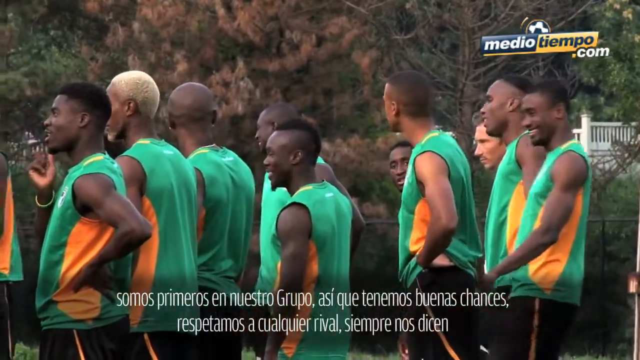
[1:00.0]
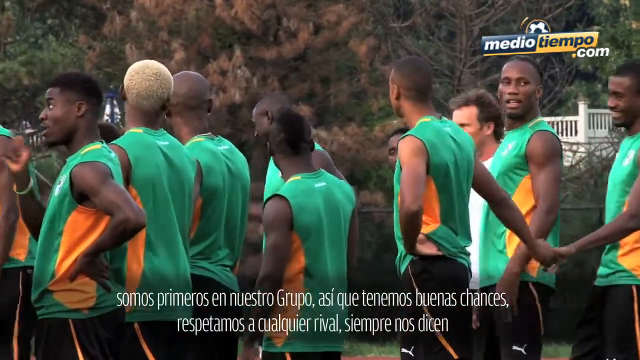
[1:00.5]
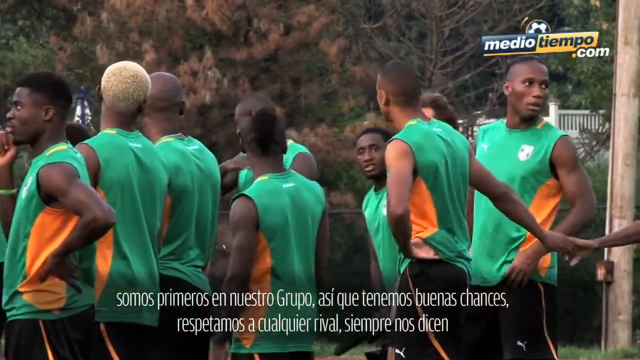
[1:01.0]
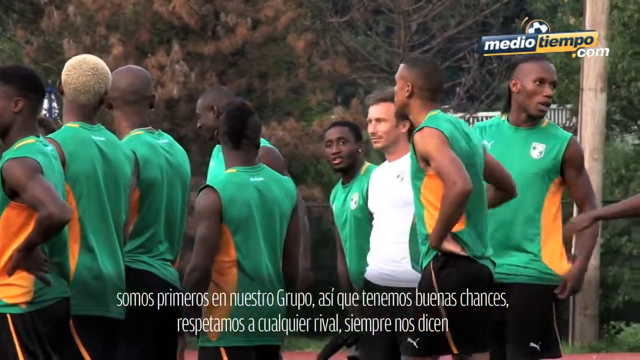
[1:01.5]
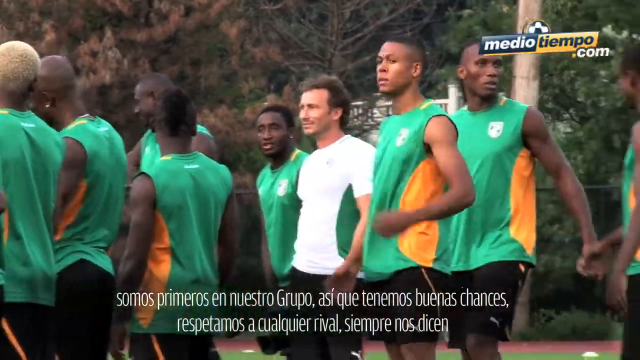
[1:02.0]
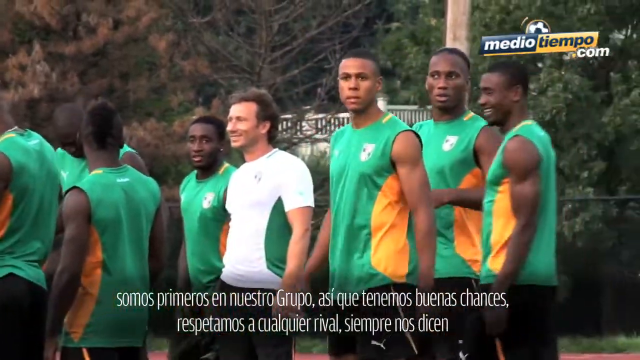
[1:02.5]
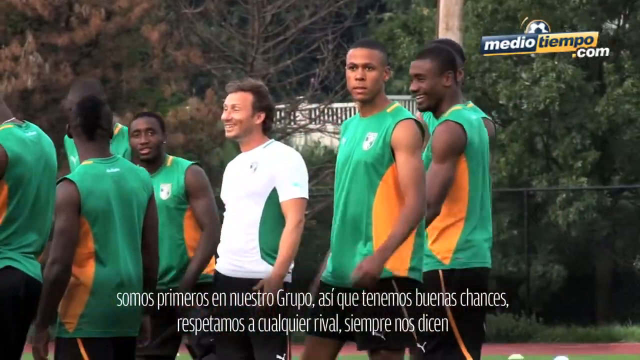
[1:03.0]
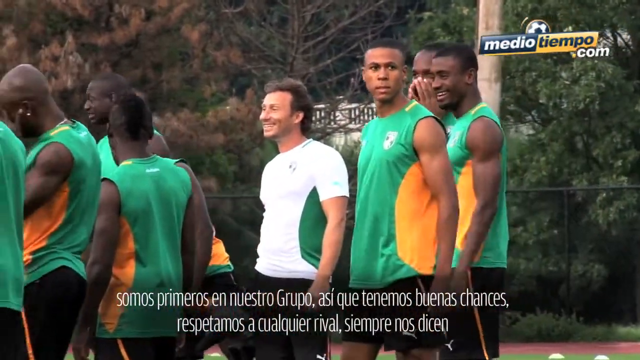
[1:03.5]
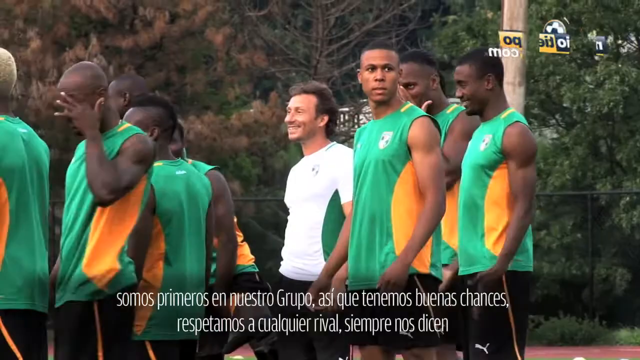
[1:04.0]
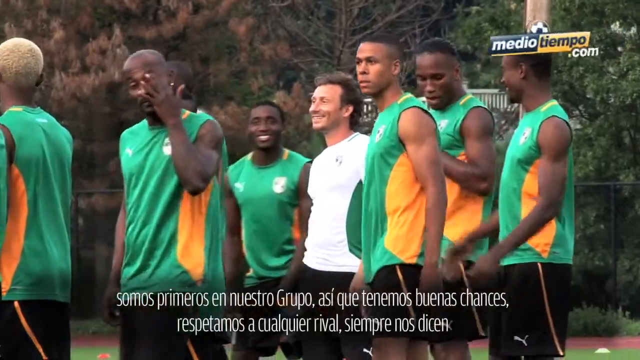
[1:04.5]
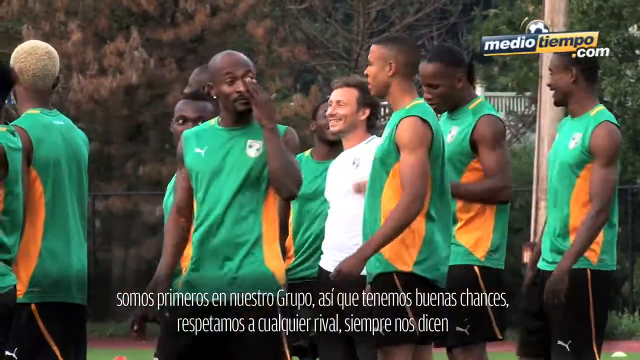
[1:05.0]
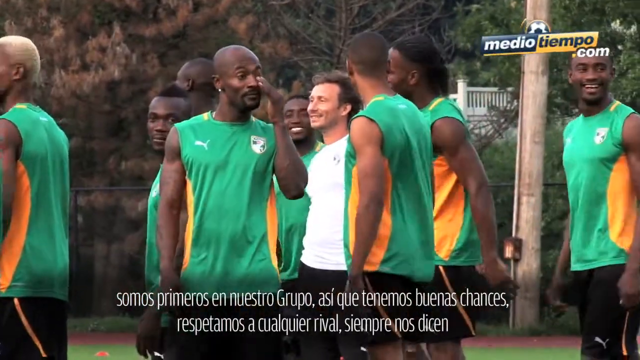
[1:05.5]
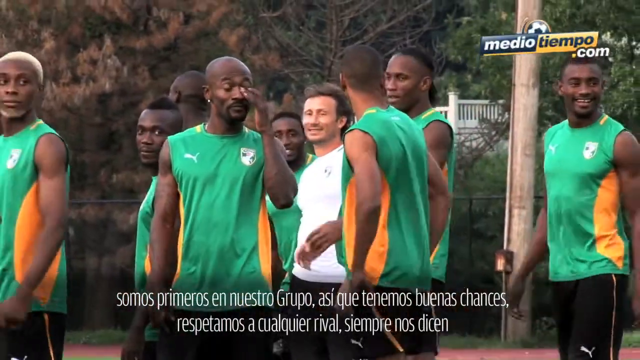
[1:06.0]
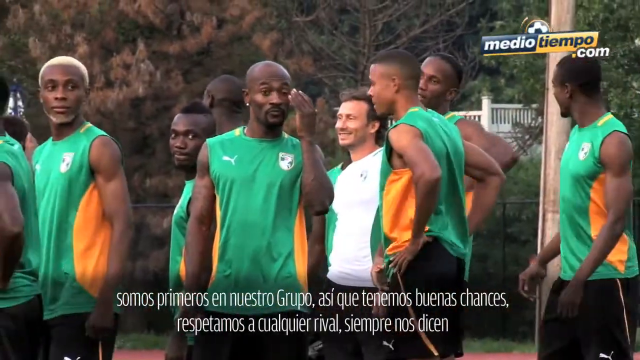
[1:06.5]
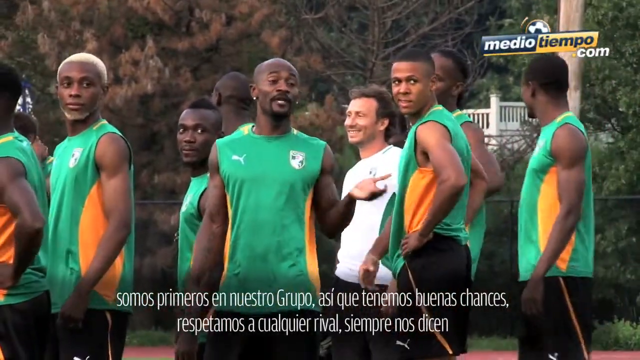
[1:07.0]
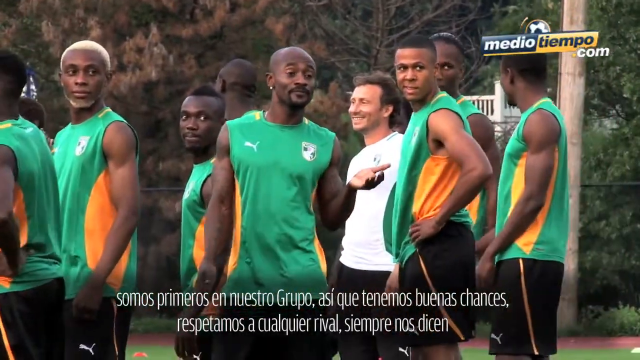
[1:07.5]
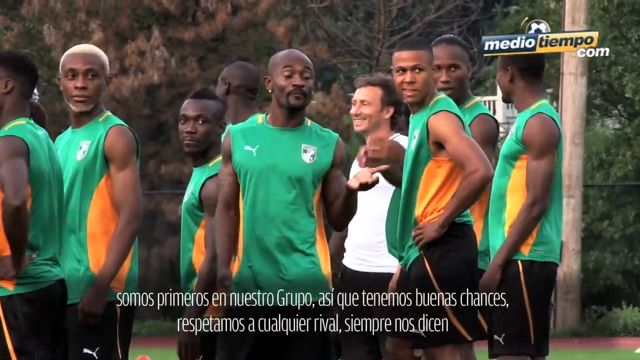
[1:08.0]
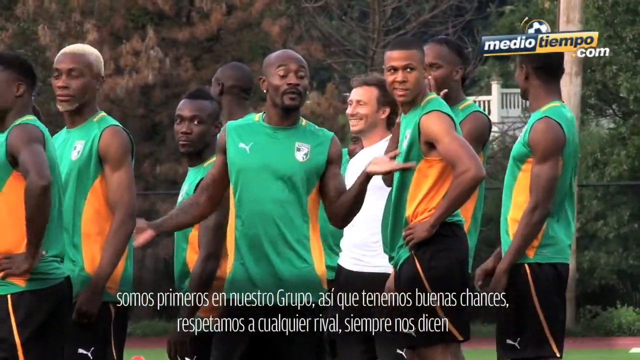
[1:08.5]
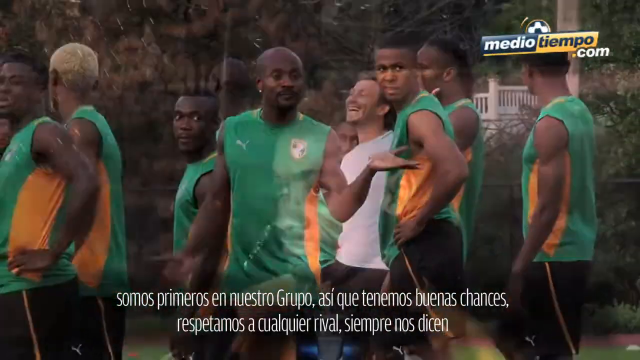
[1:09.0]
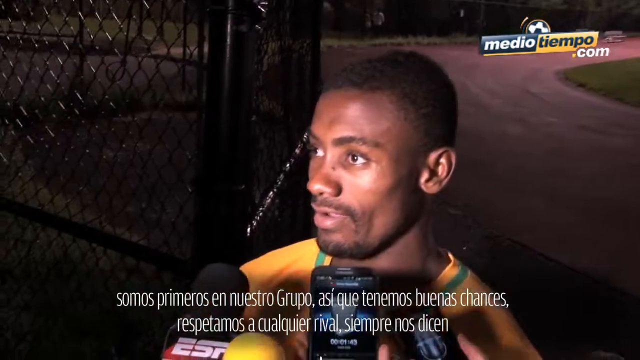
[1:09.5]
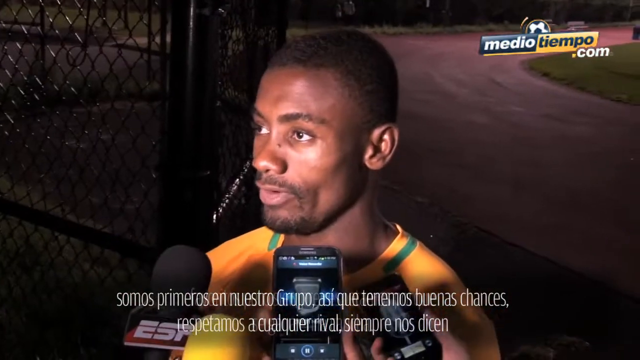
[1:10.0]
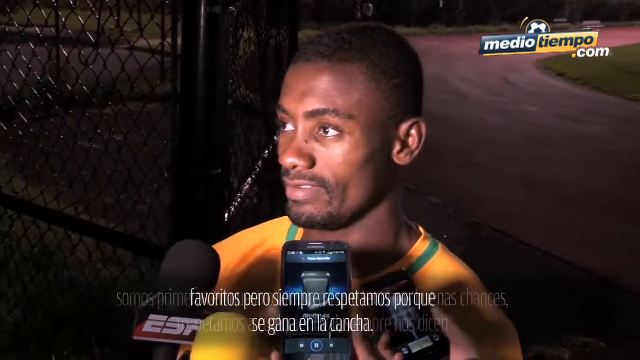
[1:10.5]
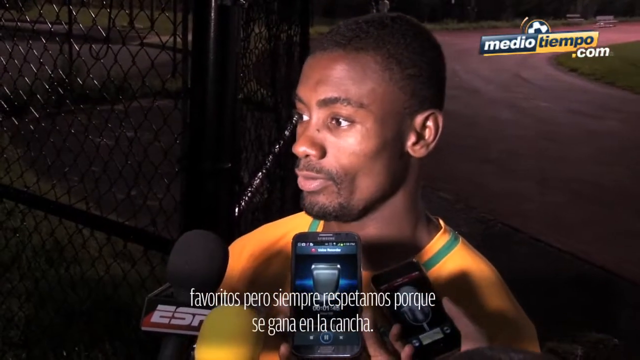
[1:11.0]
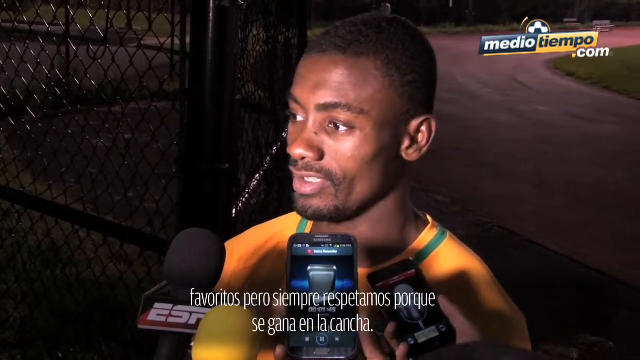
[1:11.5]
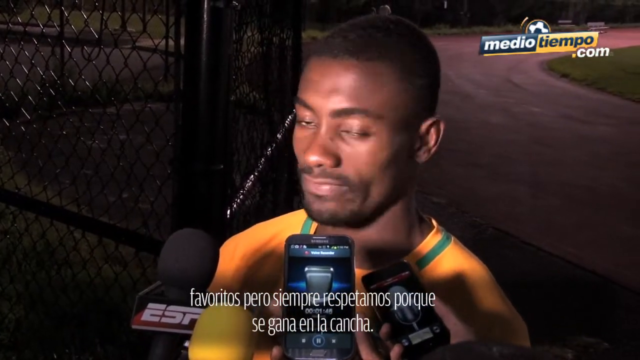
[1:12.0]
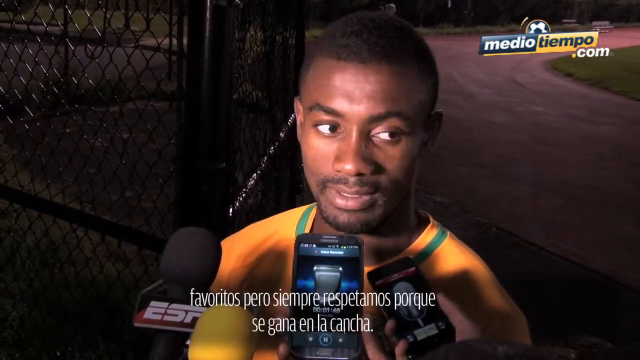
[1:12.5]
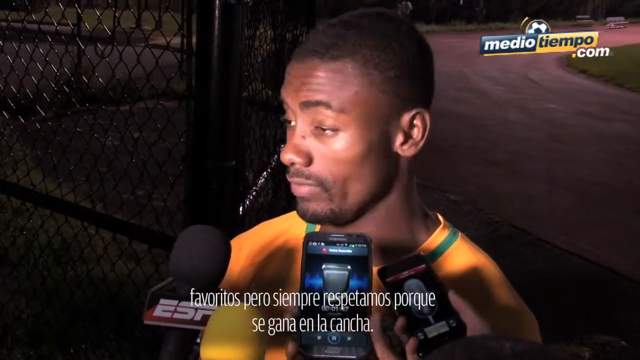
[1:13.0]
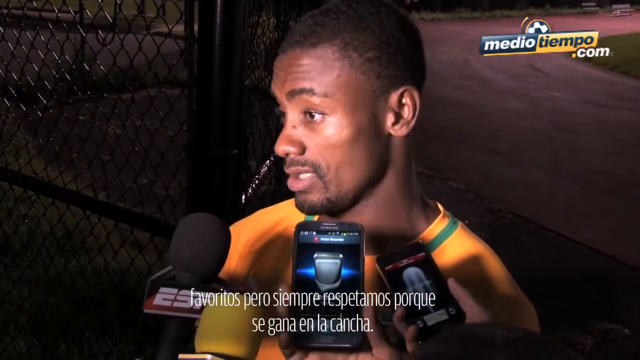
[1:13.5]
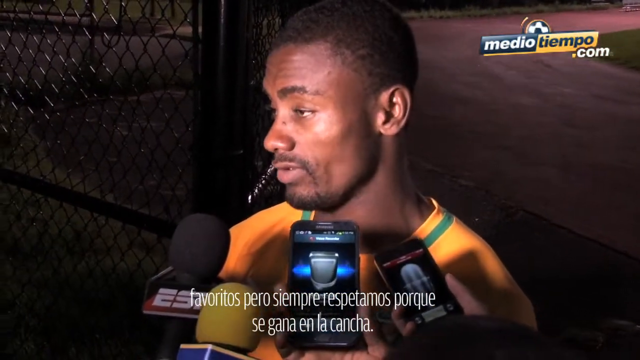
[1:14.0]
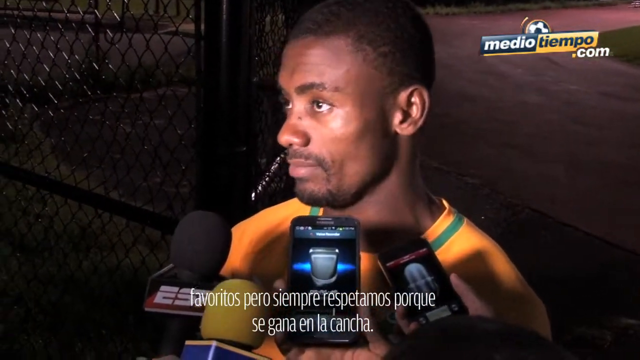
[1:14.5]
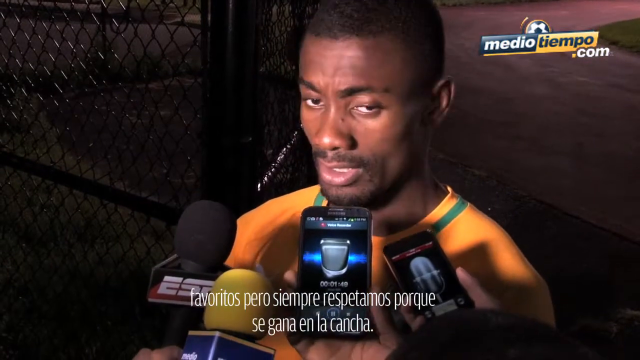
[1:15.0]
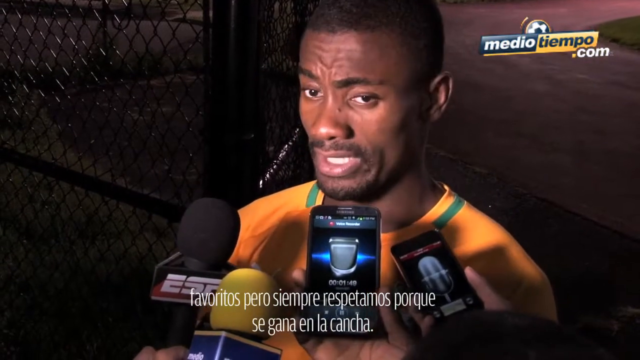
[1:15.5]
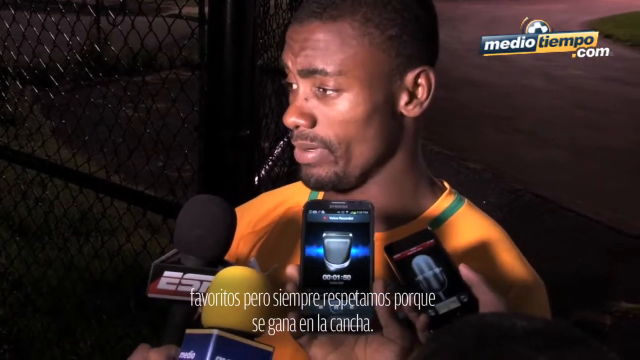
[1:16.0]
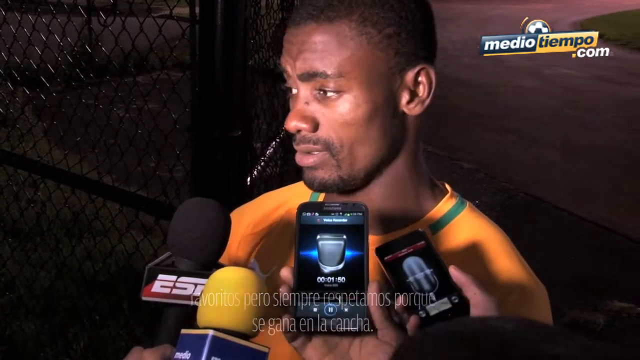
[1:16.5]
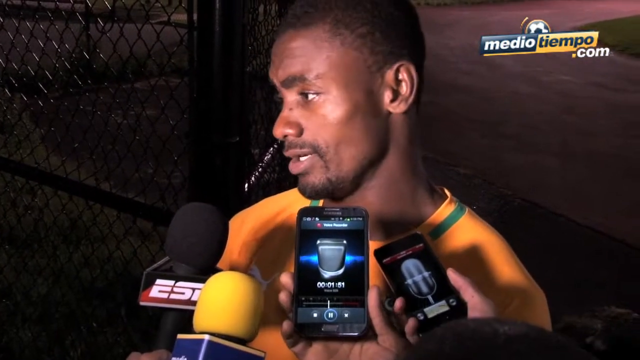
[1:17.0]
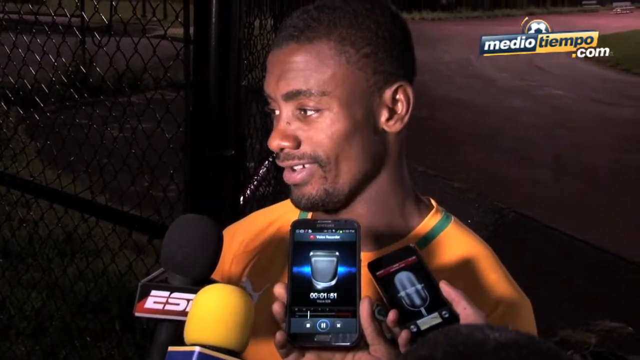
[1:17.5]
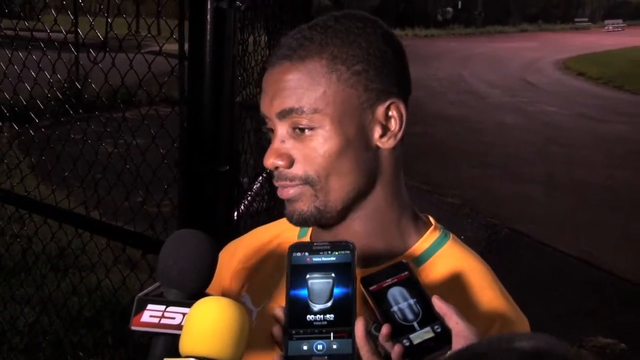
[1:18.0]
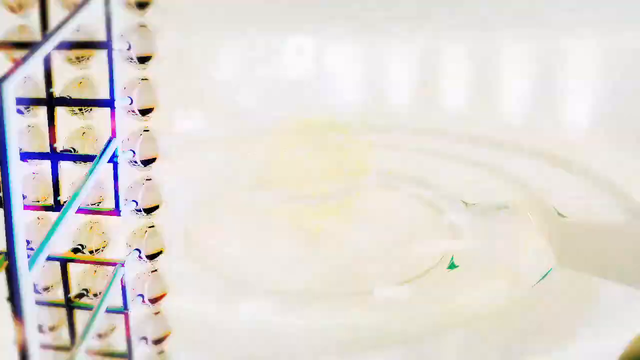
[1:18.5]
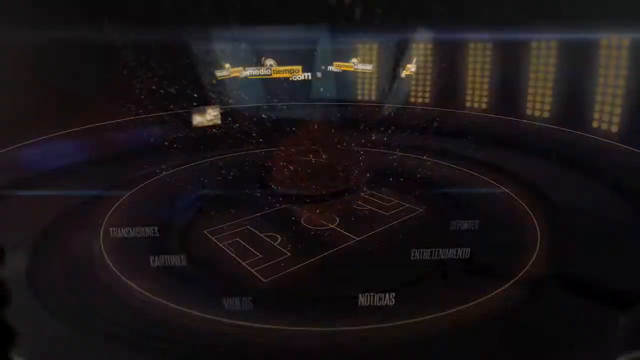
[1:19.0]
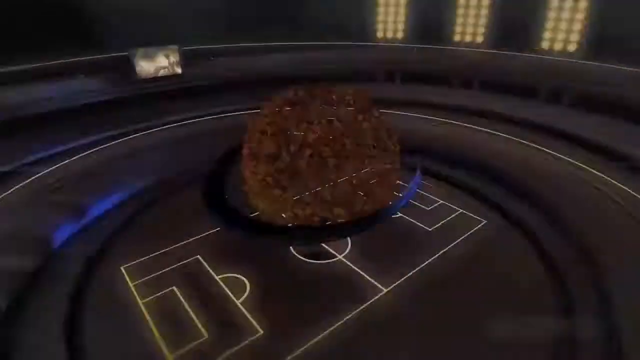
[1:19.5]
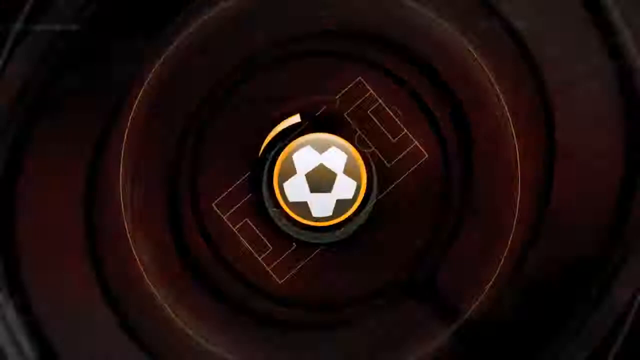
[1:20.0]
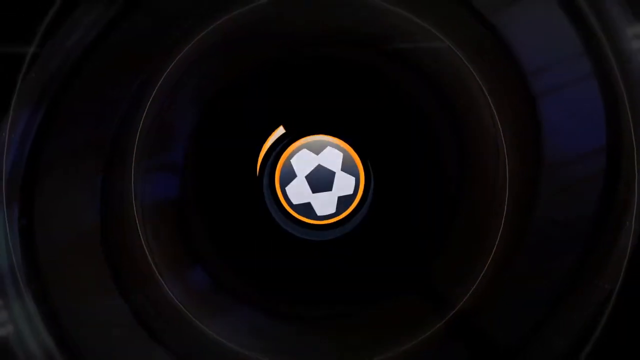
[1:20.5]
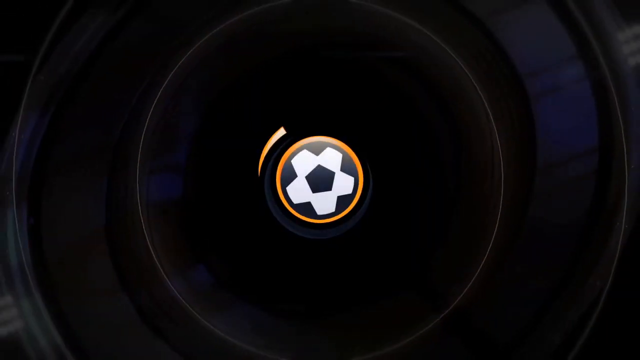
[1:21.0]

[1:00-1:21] A group of men face toward the left side of the frame and look to be laughing and talking among themselves. They all wear tank tops of the same color, and one man in a white shirt is in the background. The video then cuts to a man being interviewed at night. What looks like a cell phone and a microphone are in front of him, and the background shows what looks like a road, very dark because it is night. The man being interviewed has on a yellow shirt. The cell phones held in front of him have a picture of a microphone on them, and one of the microphones held in front of him has an ESPN logo on it.